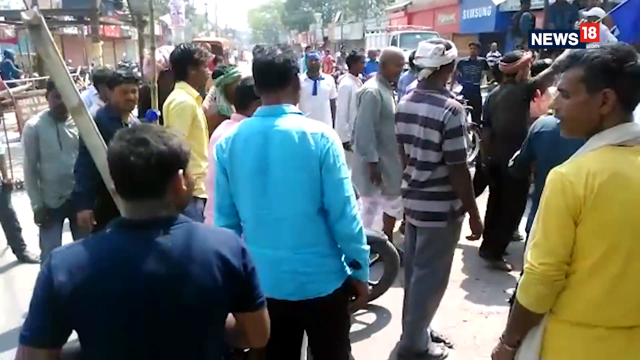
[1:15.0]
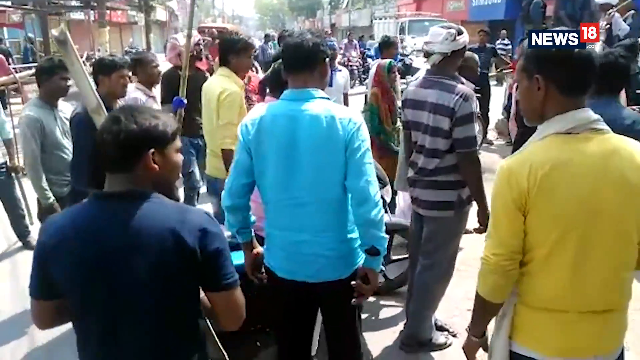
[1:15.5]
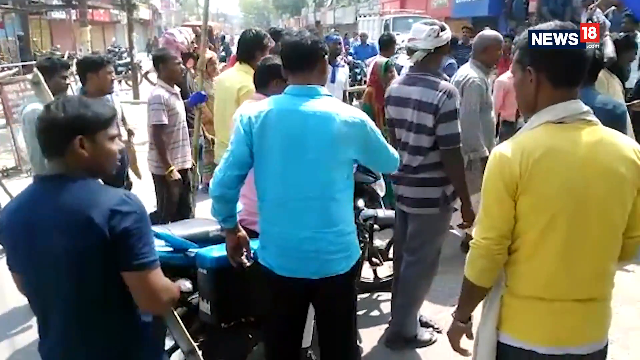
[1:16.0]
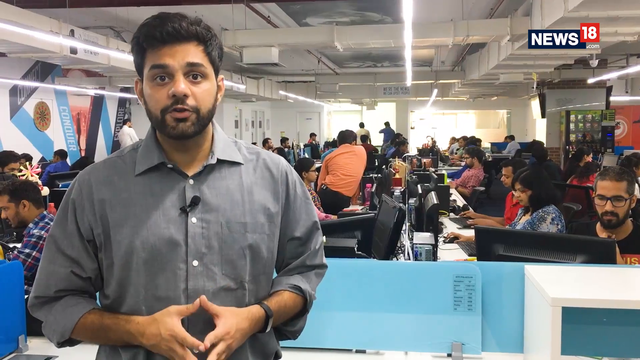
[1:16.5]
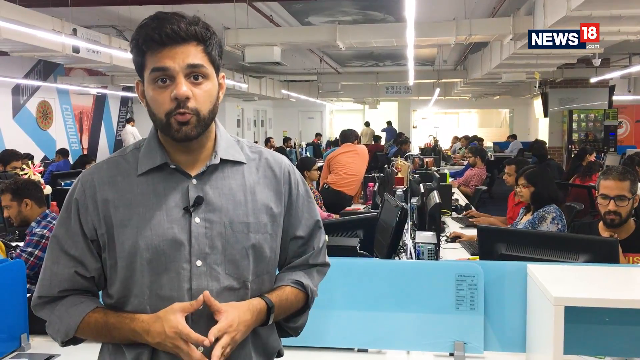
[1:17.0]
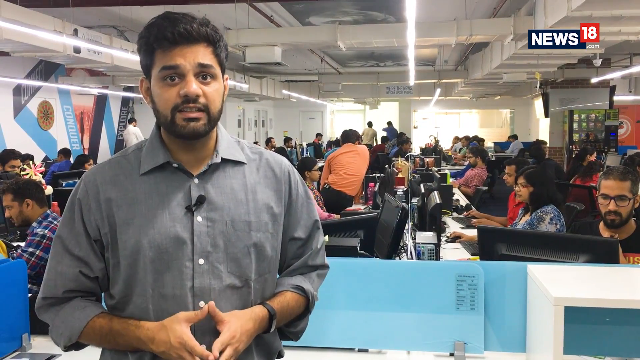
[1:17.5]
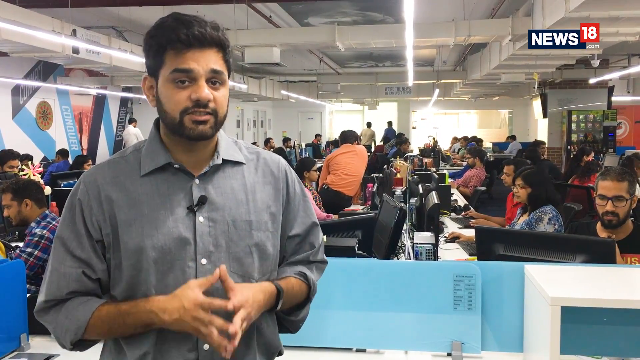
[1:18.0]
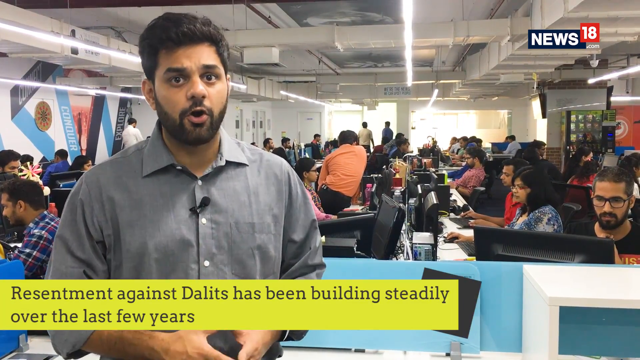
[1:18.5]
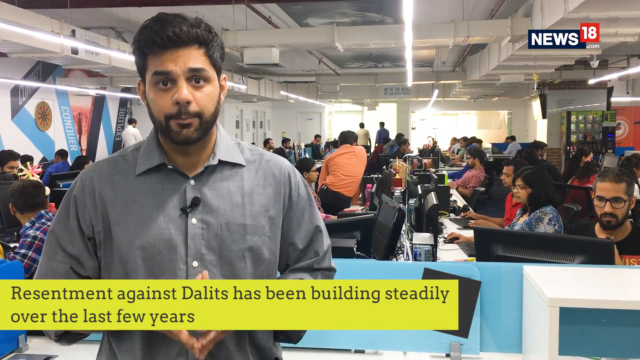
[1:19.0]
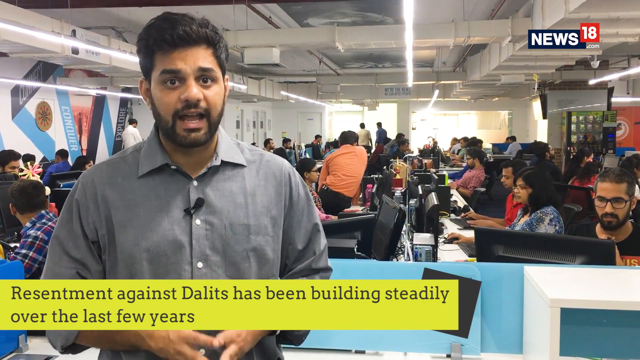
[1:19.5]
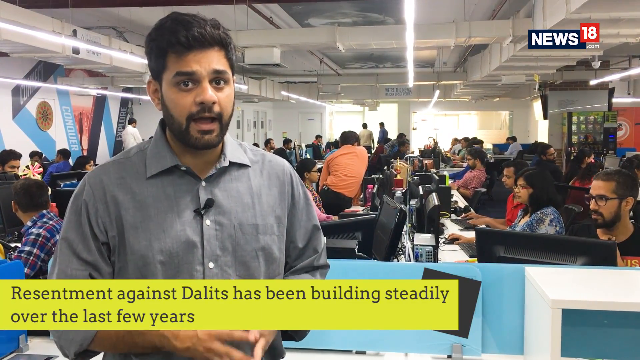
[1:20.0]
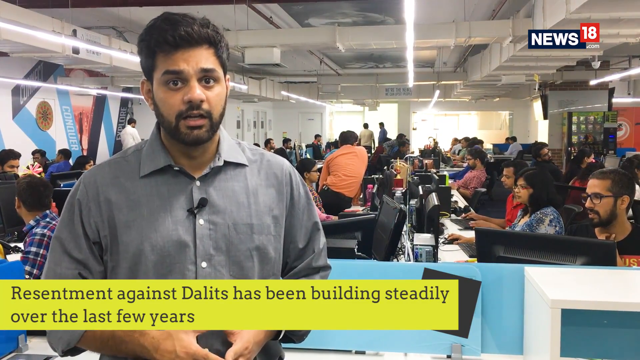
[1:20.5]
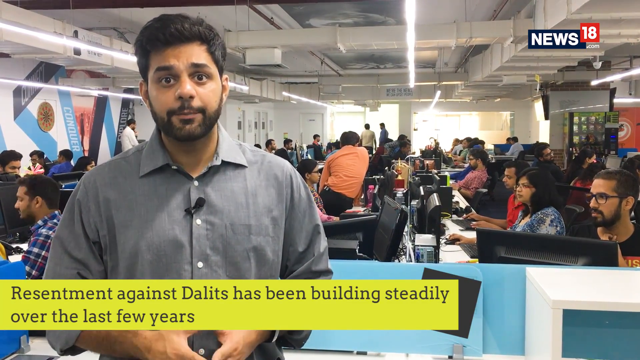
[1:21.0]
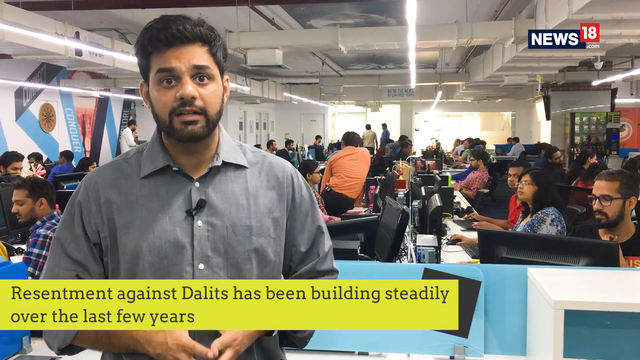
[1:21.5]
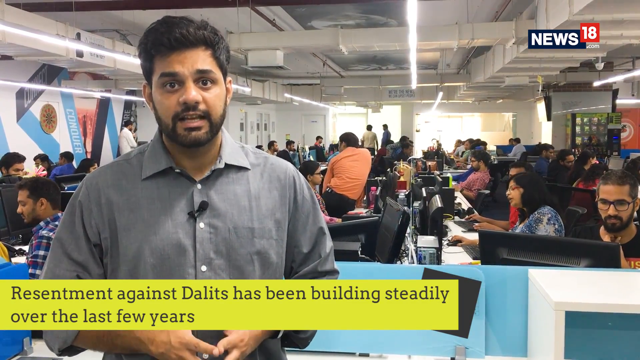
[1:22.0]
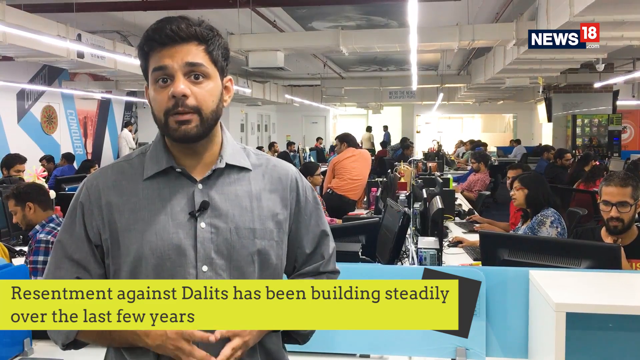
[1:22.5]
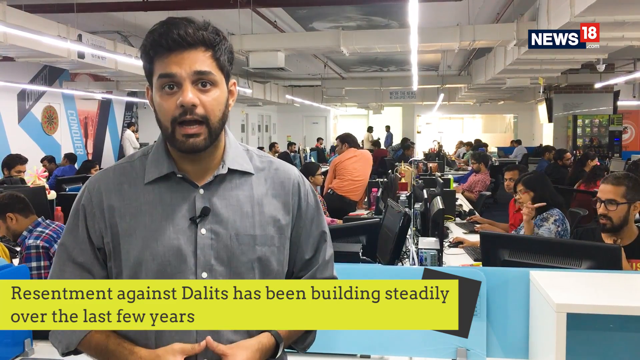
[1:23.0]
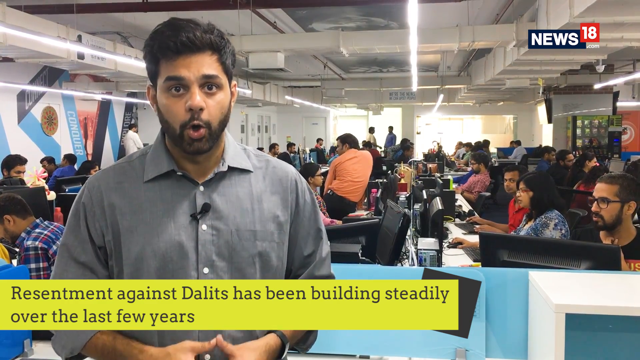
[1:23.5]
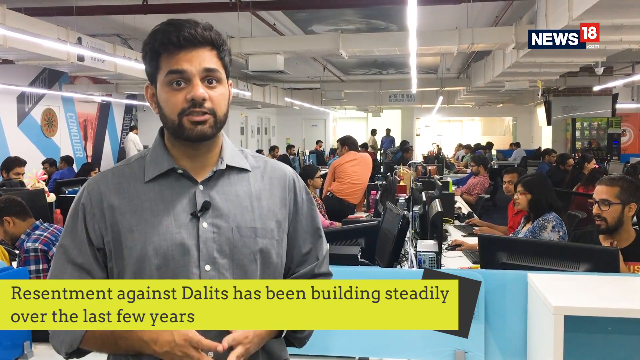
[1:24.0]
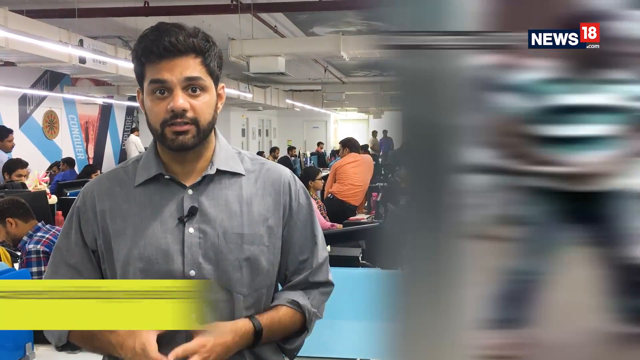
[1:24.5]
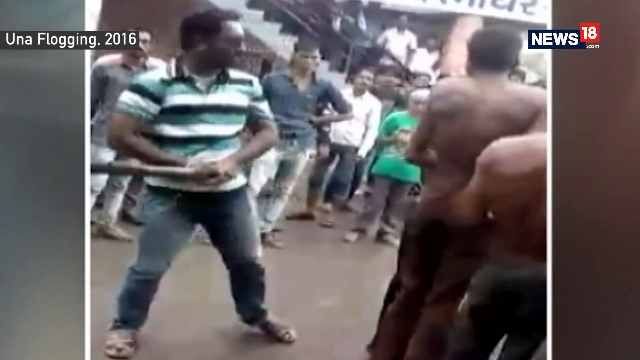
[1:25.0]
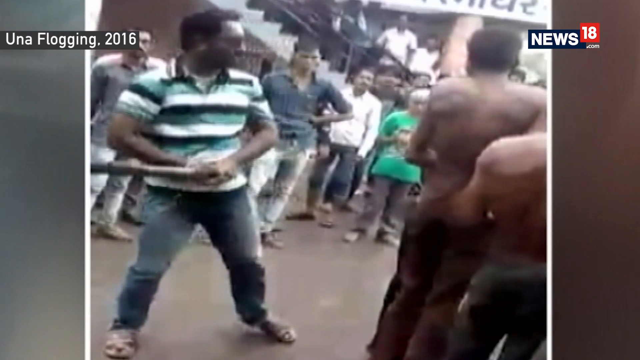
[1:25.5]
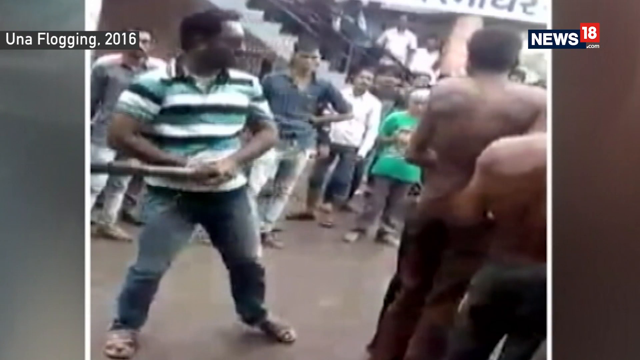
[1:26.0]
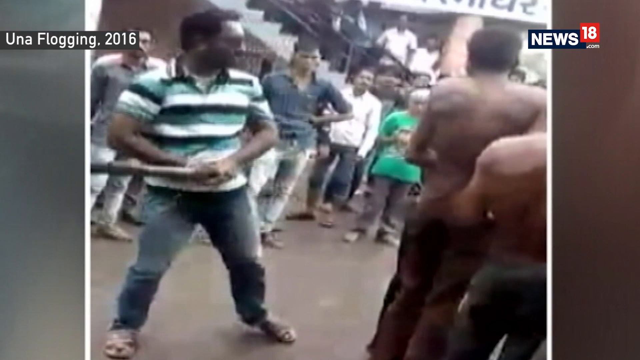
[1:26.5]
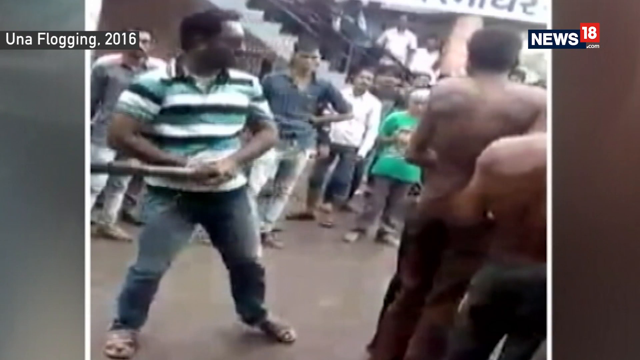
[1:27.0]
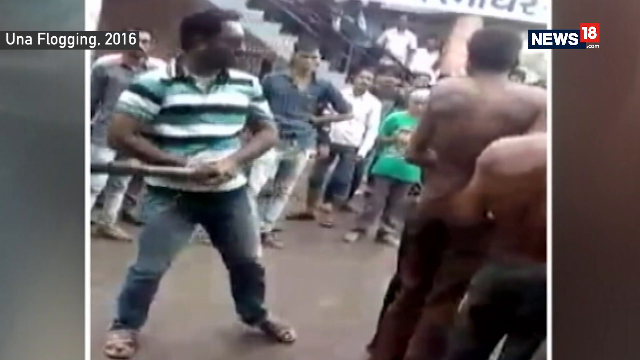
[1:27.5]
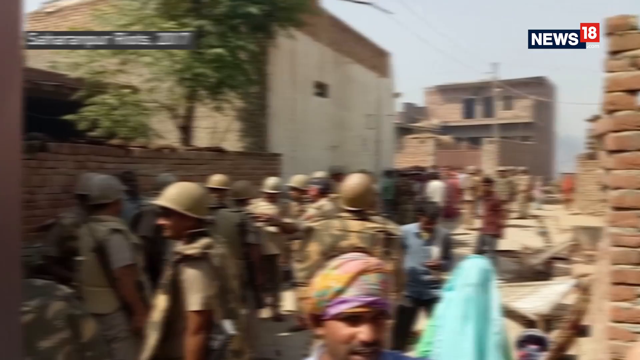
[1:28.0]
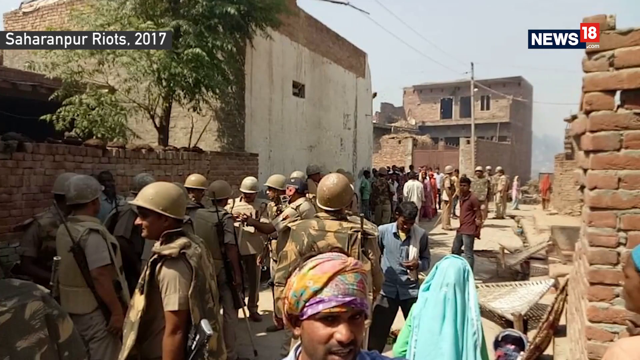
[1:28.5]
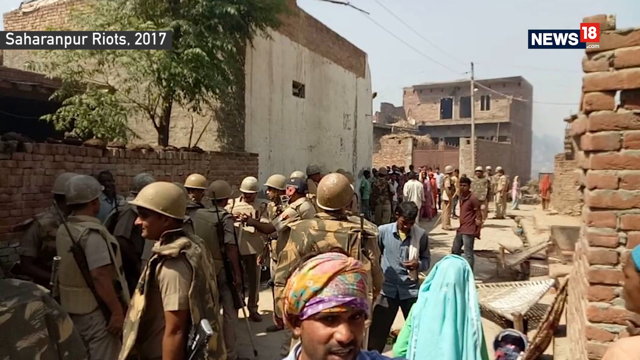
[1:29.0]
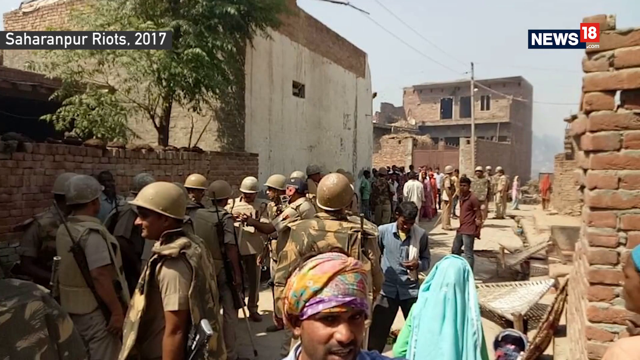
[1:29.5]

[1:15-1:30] The video, about Bharat Bandh, why Dalits took to the streets in protest, is by News18. People are shown in the street, then the newscaster in a newsroom, with a text overlay at the bottom below him as he talks, reading "resentment against Dalits has been building steadily over the last few years". Still pictures follow: a man holding a stick or a bat, a couple of shirtless men in a crowd, and officers who look to be military, standing around wearing fatigues and helmets and carrying guns. The video returns to the newscaster with the same text overlay, then to the still picture of the man with the bat and another of the military.